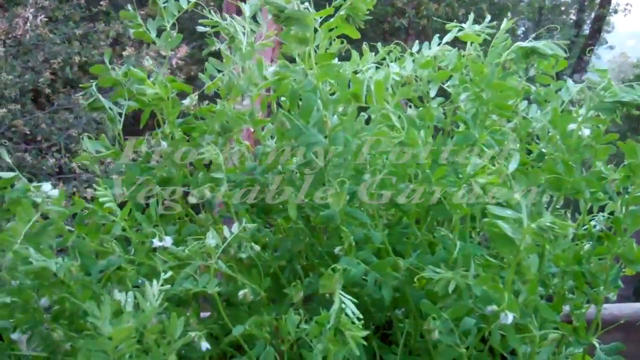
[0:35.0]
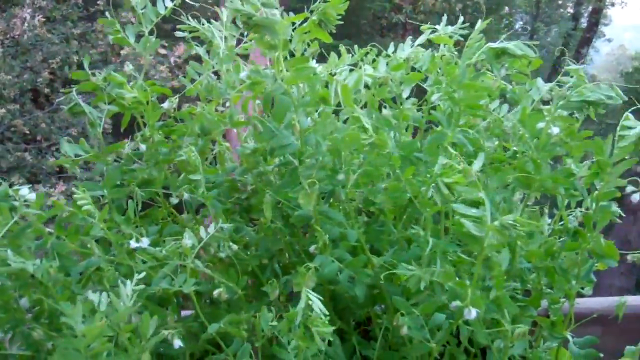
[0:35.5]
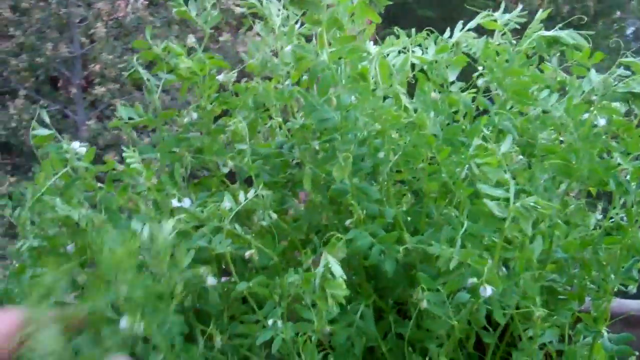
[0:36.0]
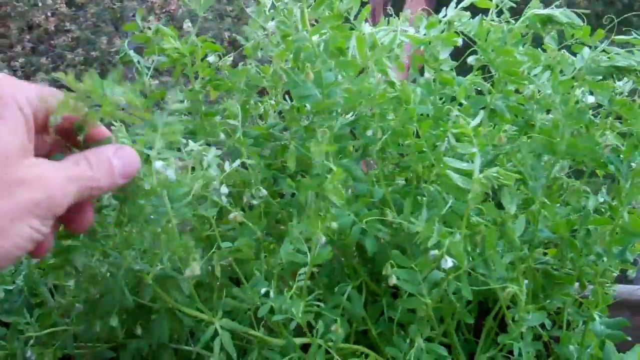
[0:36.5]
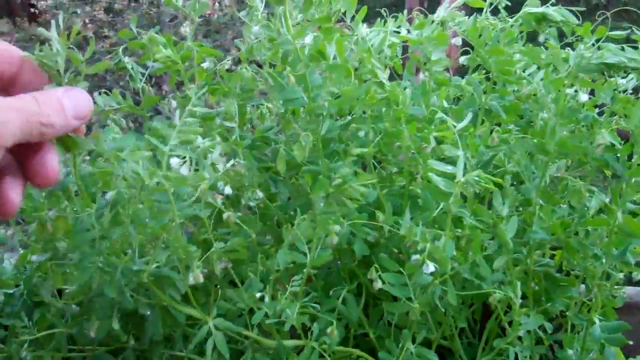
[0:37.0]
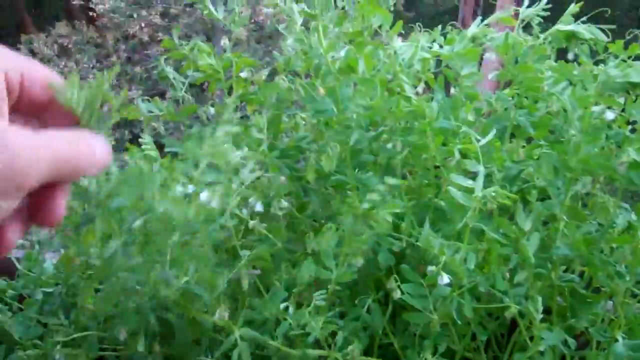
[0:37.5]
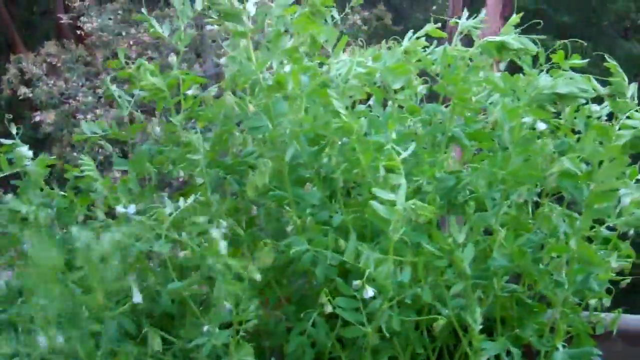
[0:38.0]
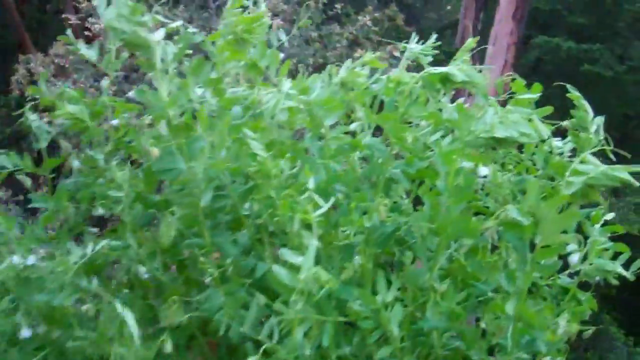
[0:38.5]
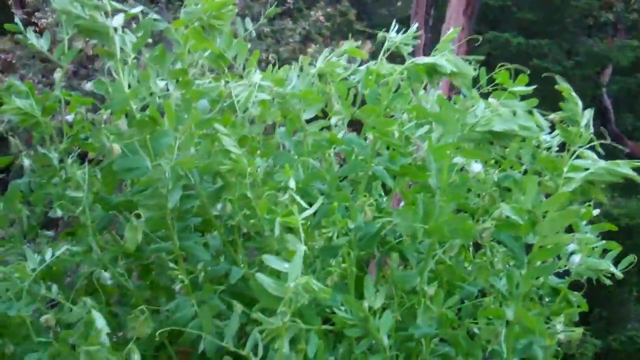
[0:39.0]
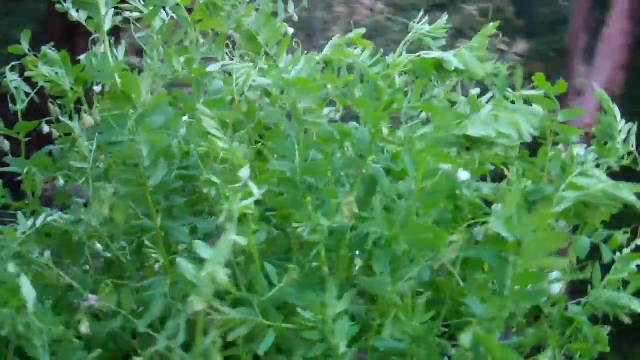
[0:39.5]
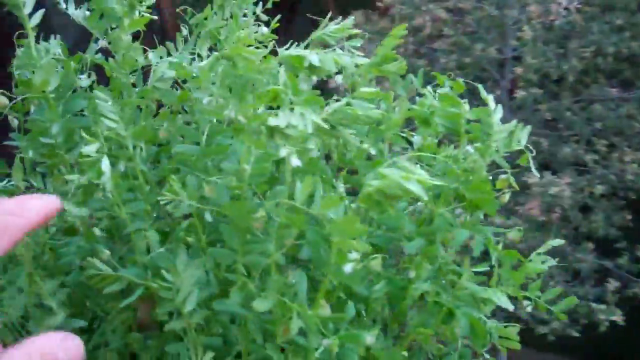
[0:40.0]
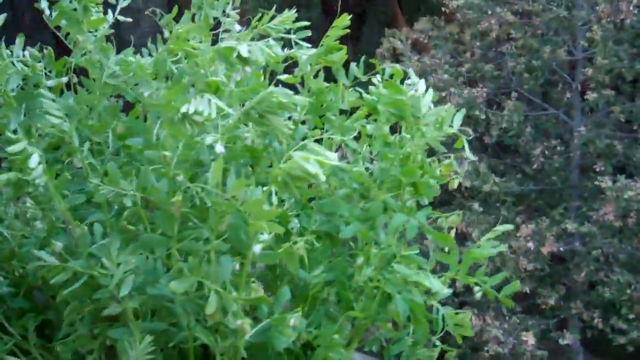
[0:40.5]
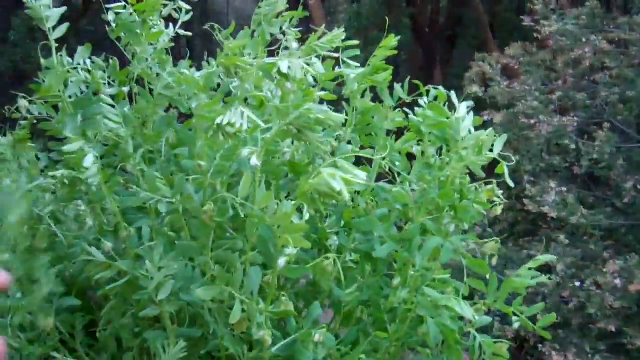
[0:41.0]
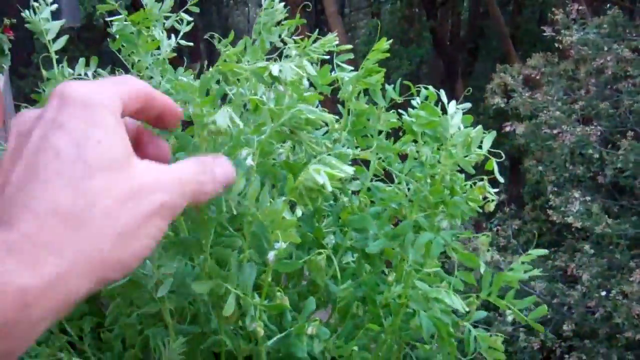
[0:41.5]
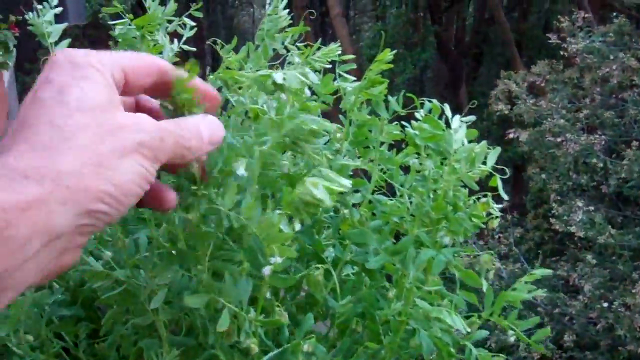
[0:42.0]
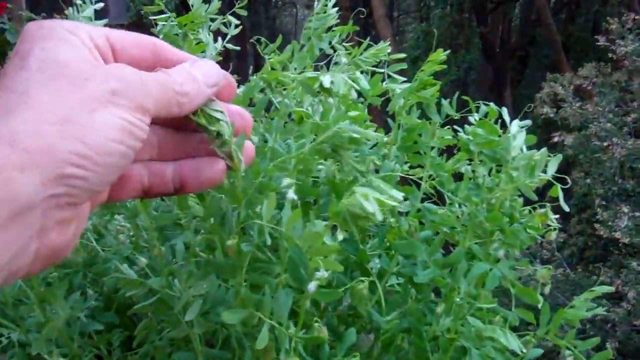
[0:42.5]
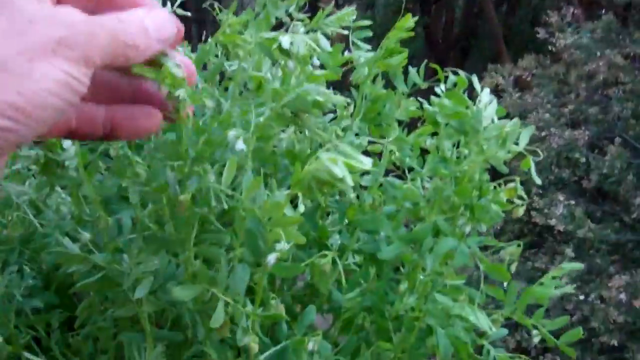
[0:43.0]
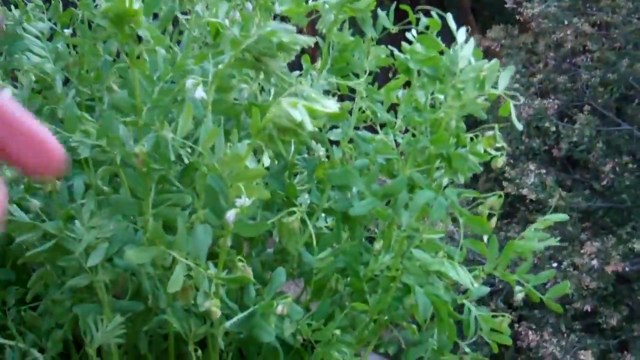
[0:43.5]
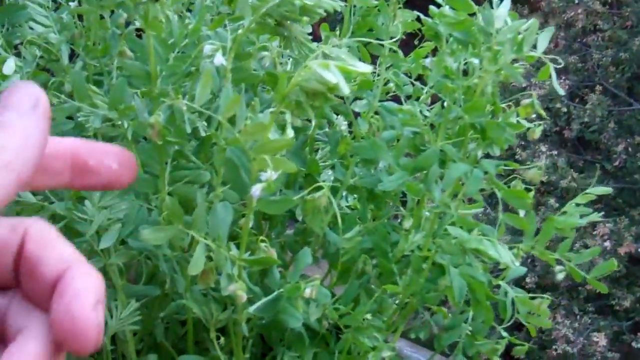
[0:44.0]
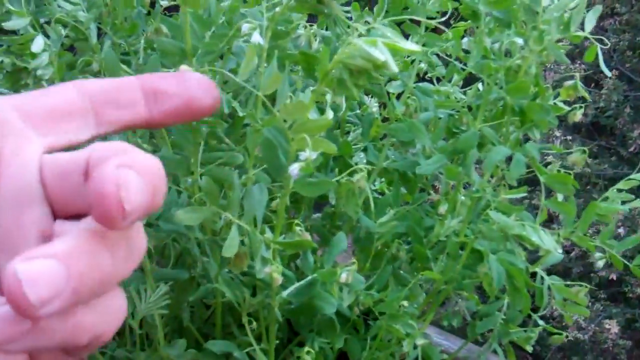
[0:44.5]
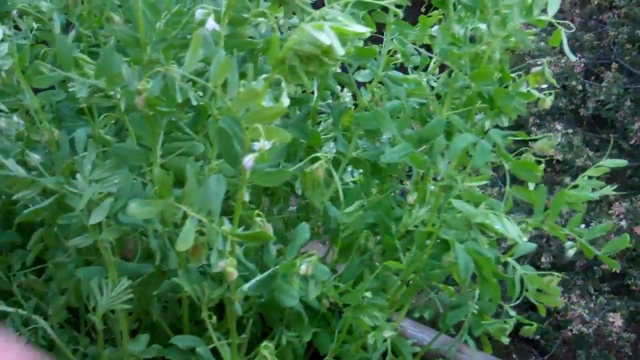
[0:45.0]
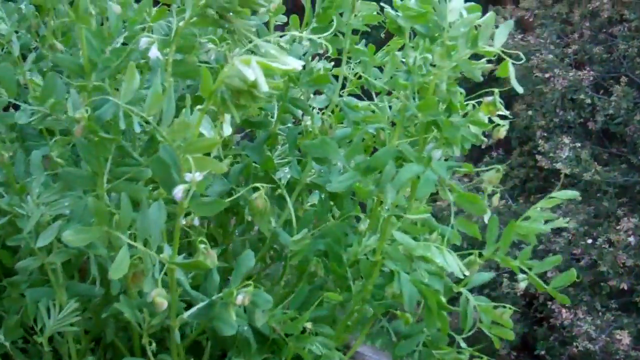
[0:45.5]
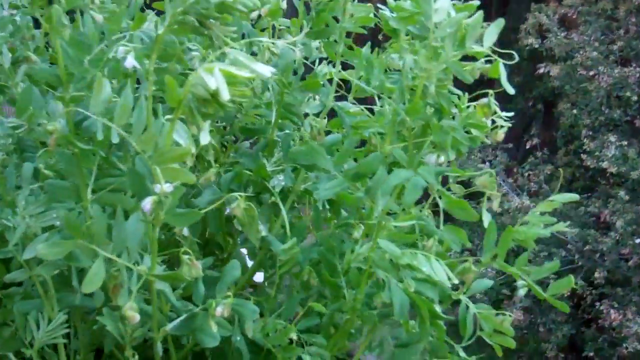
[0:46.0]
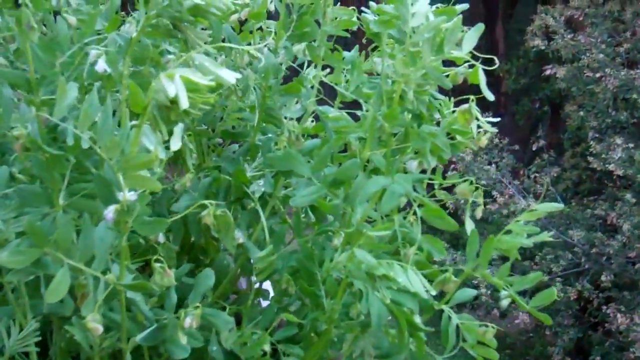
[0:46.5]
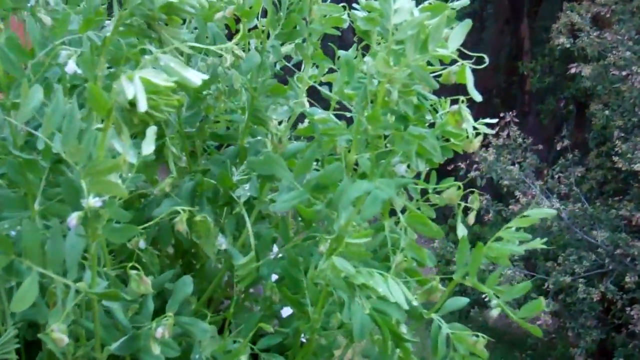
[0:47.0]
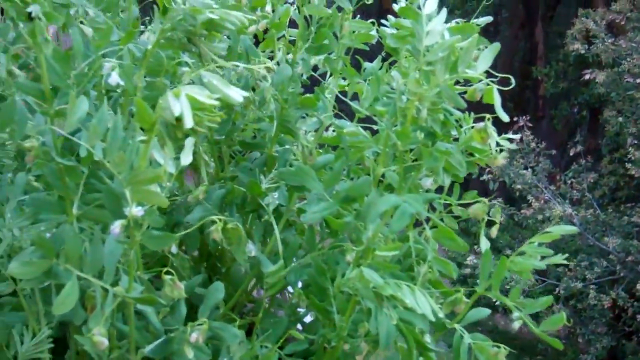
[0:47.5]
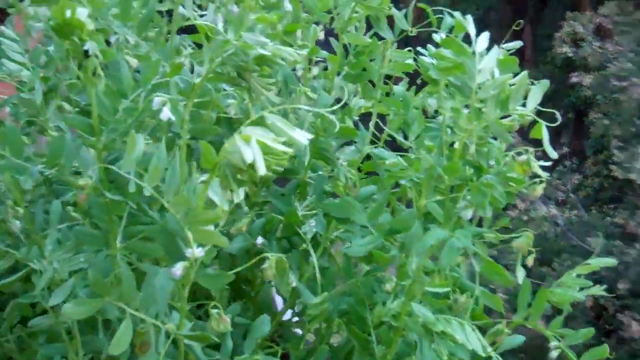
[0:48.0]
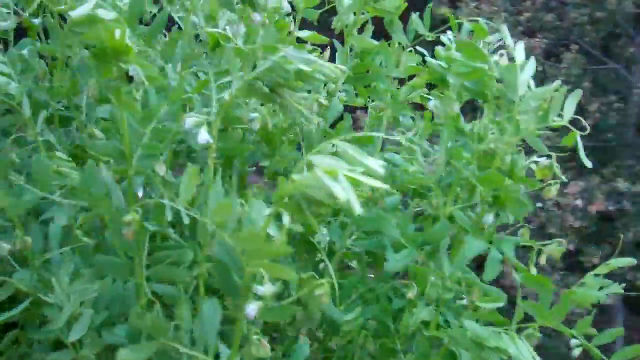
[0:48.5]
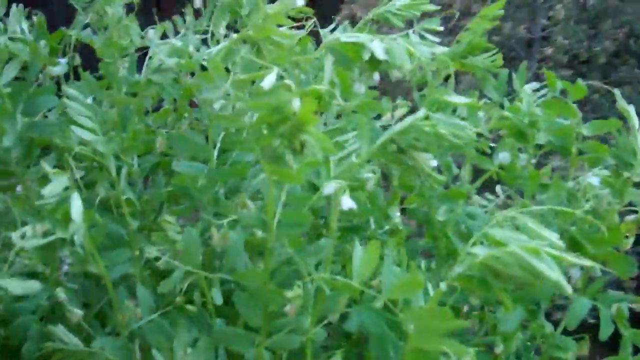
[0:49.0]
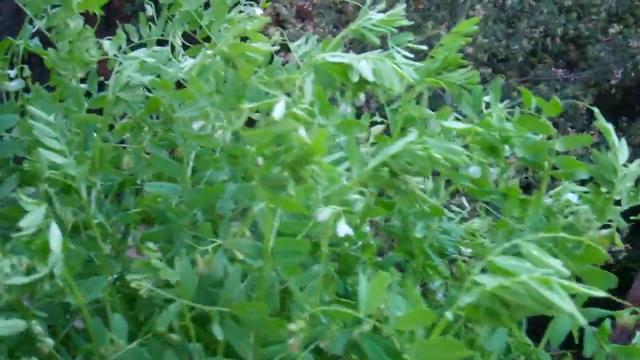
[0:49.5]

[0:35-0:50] The man continues to reach out and touch the lentils, checking the plant. He points at a certain feature on the lentil and at various aspects of it, and the video shows varying shots of the plant. He picks up one of the stems and holds it up, grabs the leaf of another, and then points at another sprig of leaves. He remains the only figure in the video, and only his hand is shown.